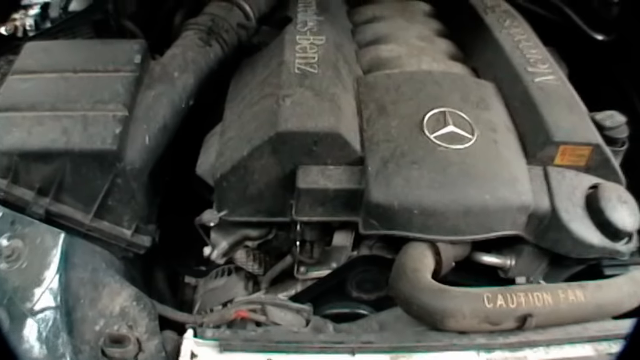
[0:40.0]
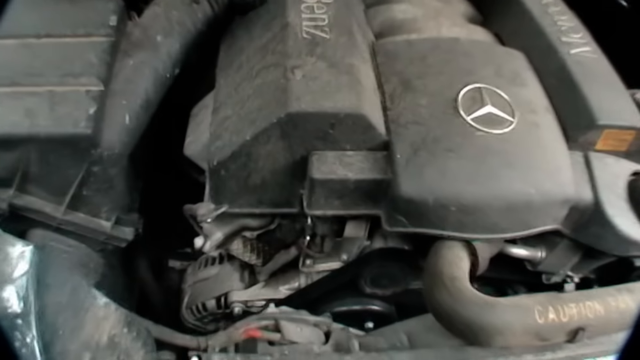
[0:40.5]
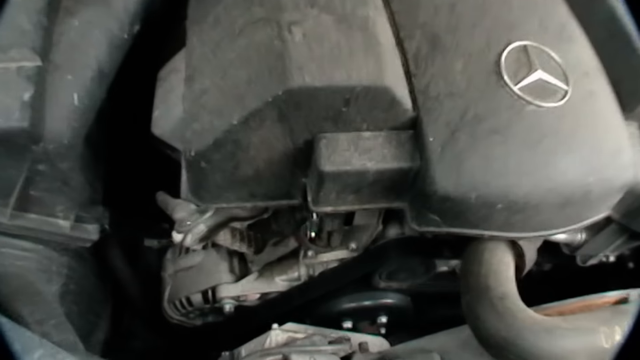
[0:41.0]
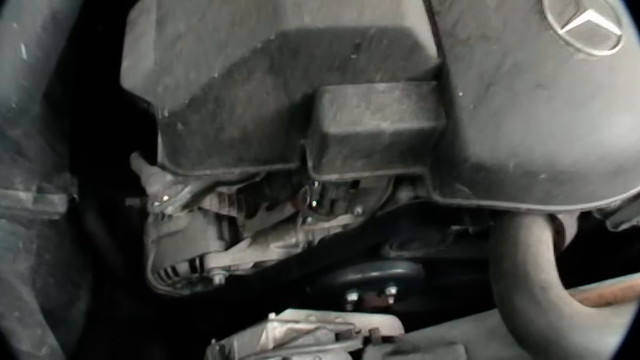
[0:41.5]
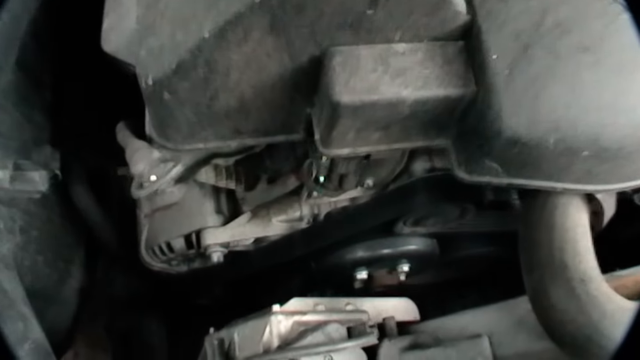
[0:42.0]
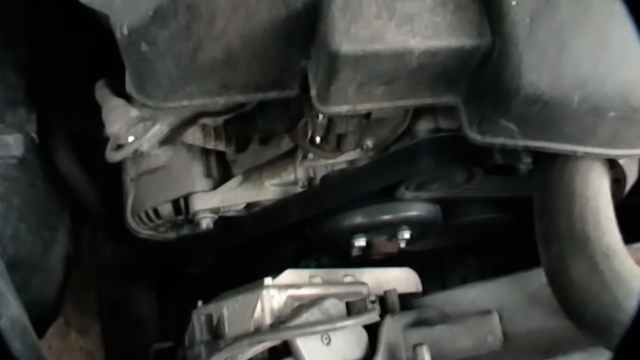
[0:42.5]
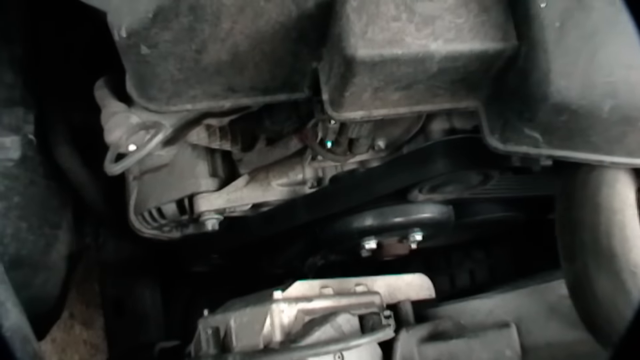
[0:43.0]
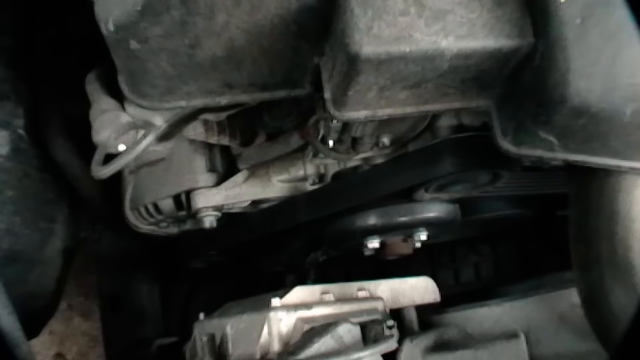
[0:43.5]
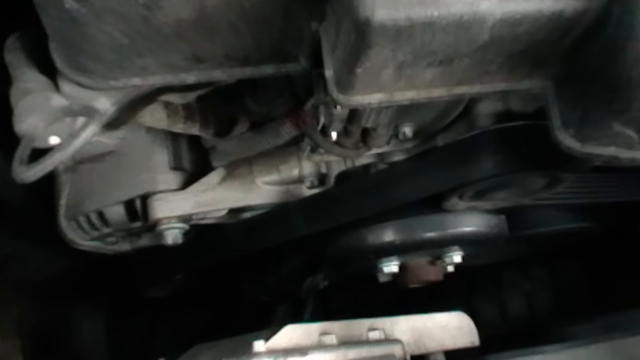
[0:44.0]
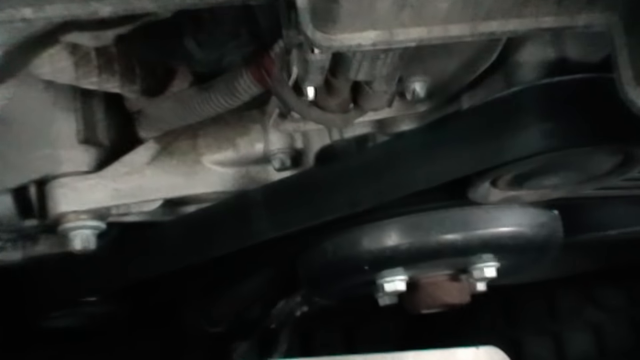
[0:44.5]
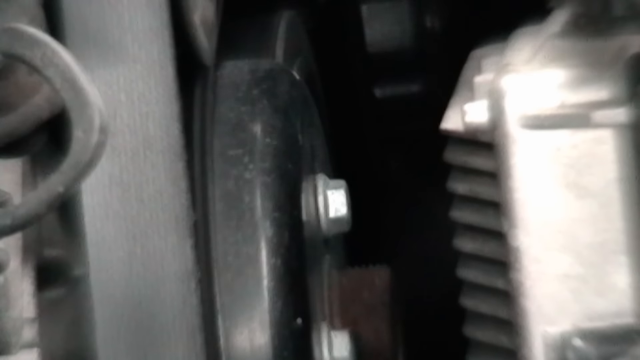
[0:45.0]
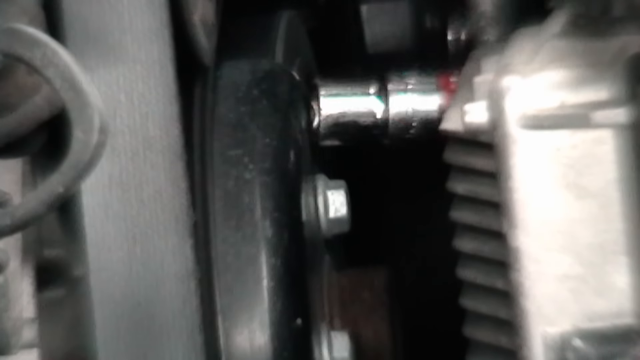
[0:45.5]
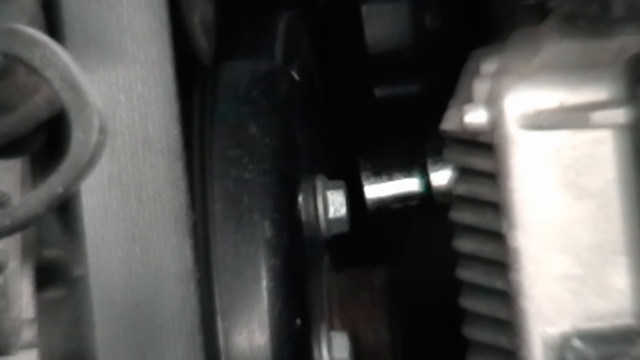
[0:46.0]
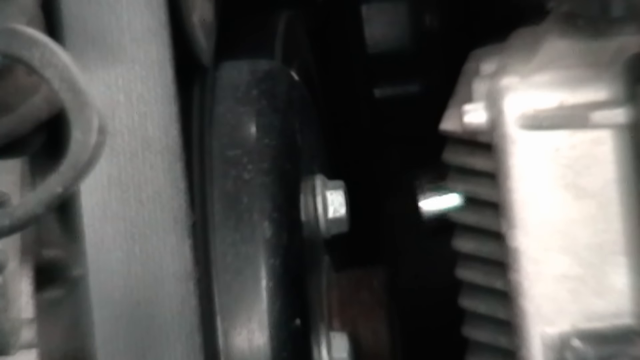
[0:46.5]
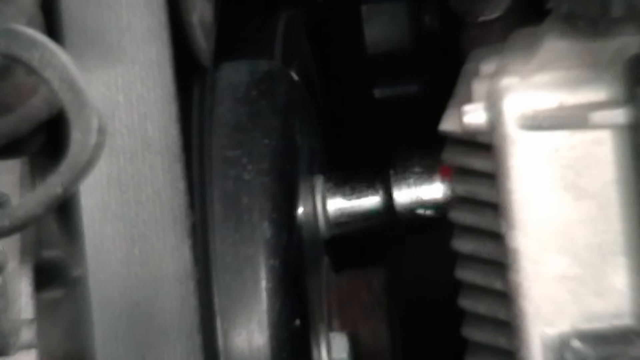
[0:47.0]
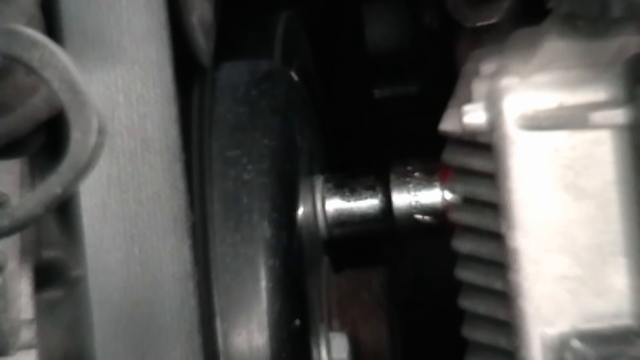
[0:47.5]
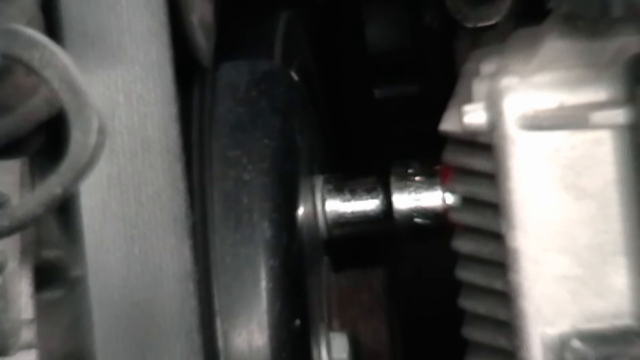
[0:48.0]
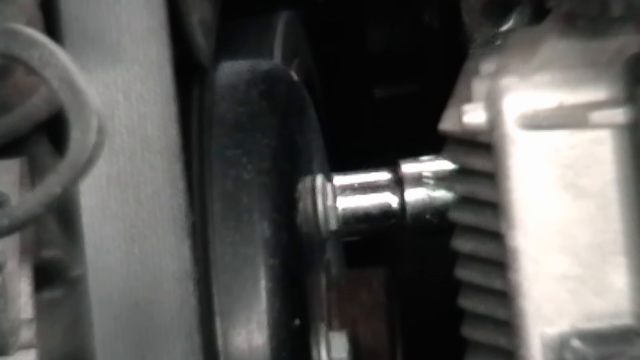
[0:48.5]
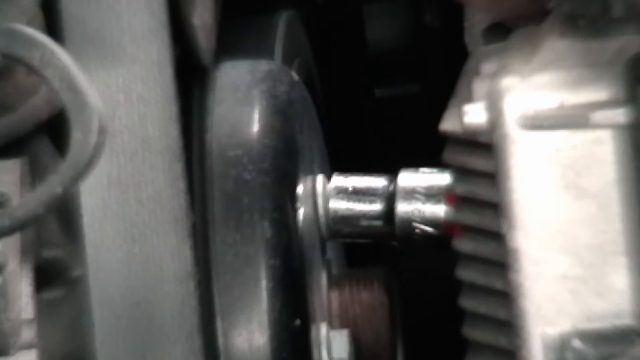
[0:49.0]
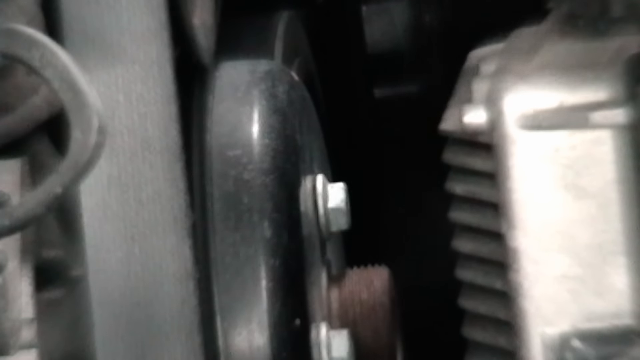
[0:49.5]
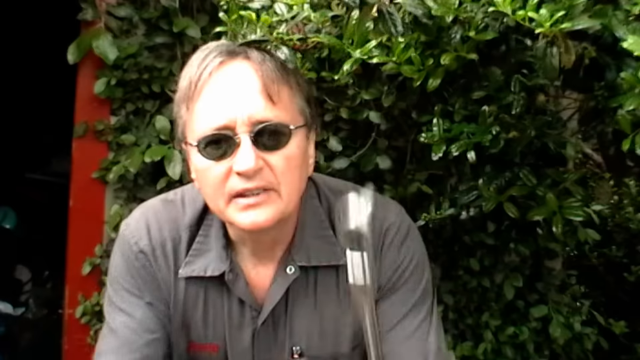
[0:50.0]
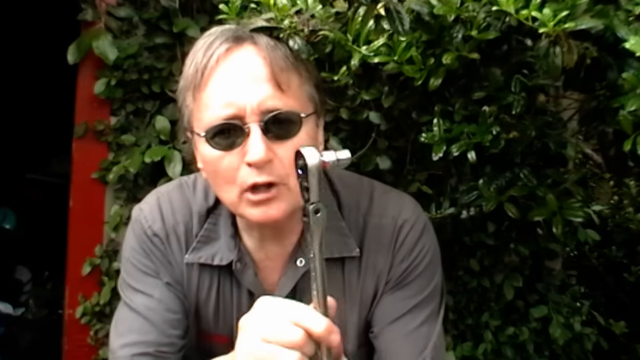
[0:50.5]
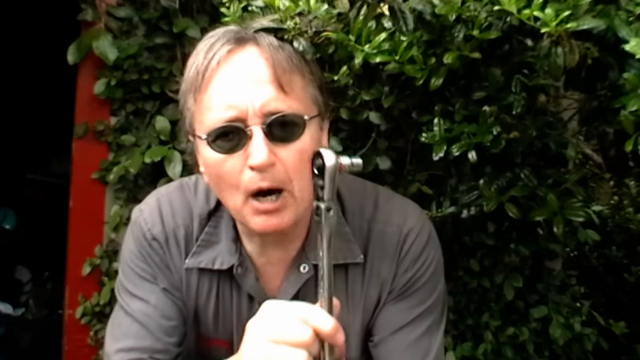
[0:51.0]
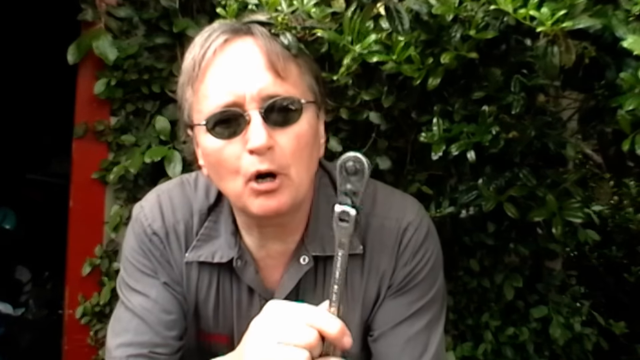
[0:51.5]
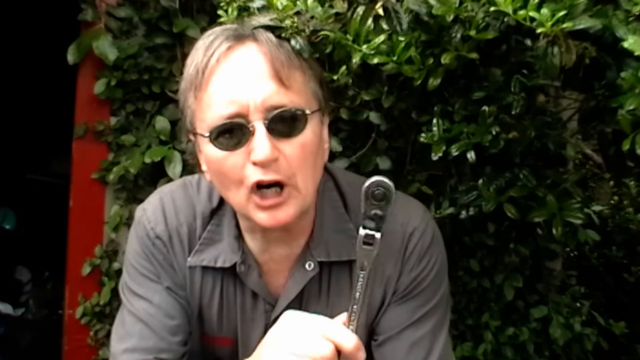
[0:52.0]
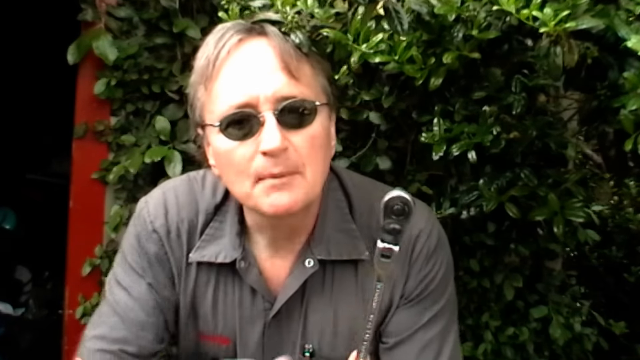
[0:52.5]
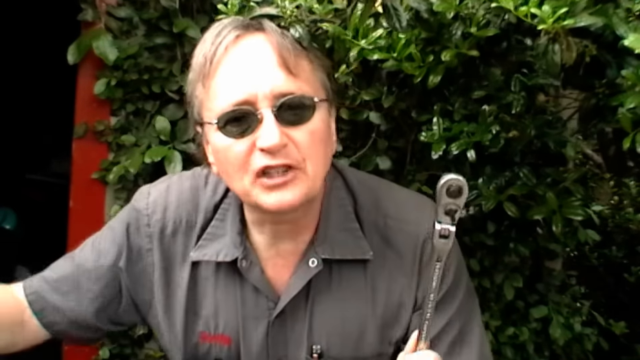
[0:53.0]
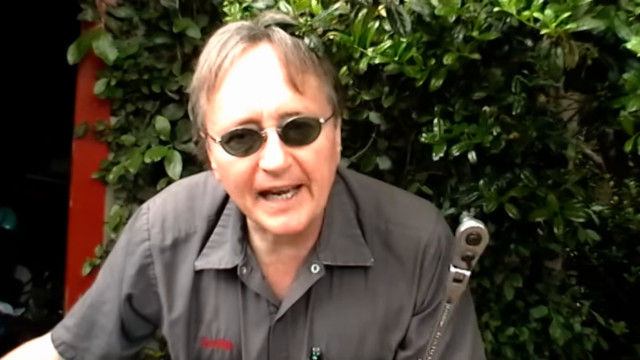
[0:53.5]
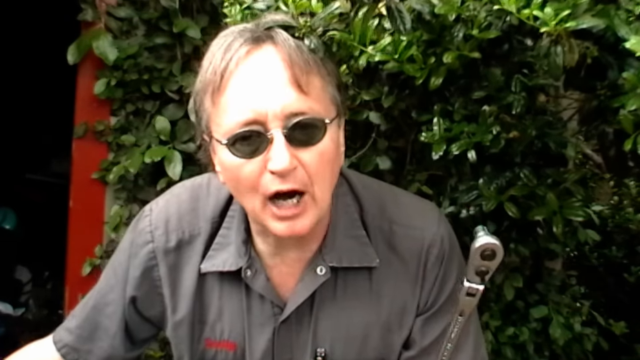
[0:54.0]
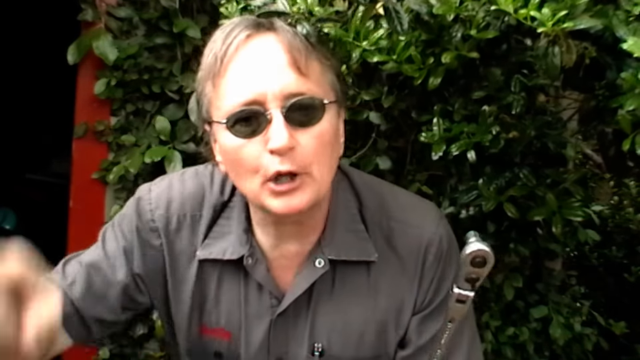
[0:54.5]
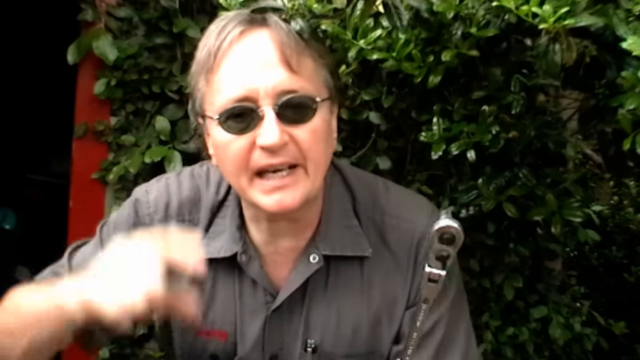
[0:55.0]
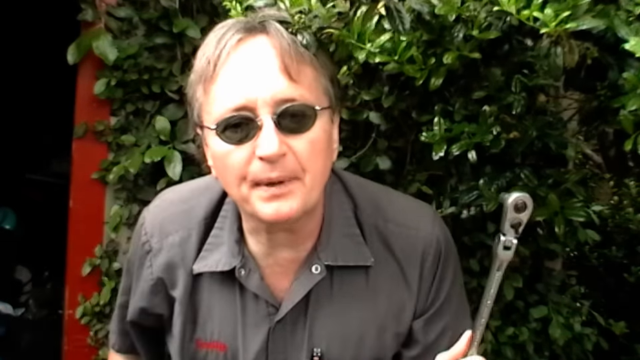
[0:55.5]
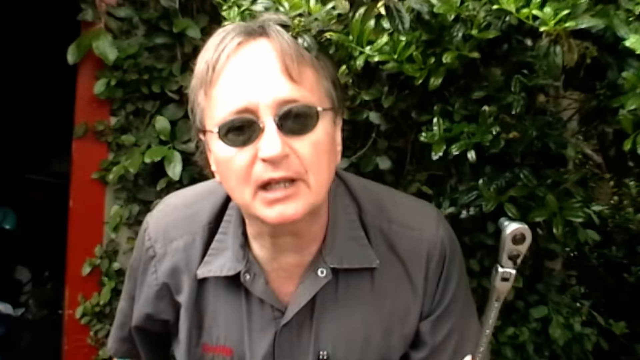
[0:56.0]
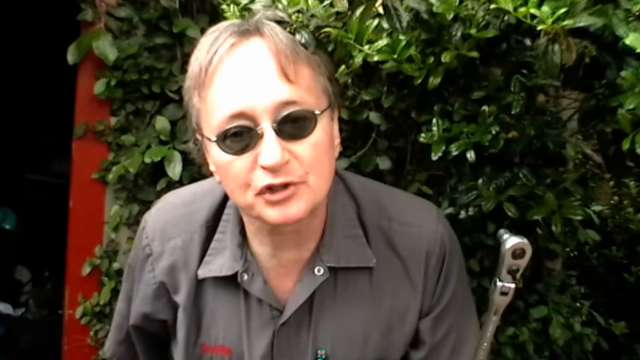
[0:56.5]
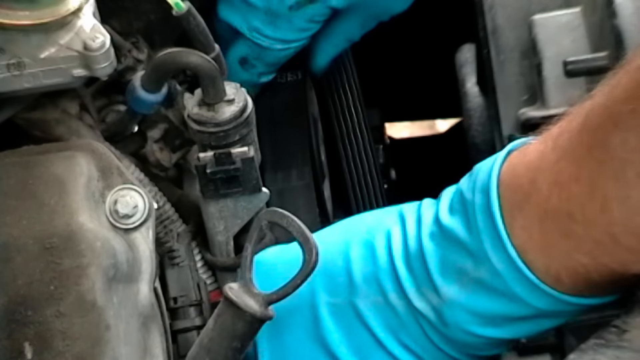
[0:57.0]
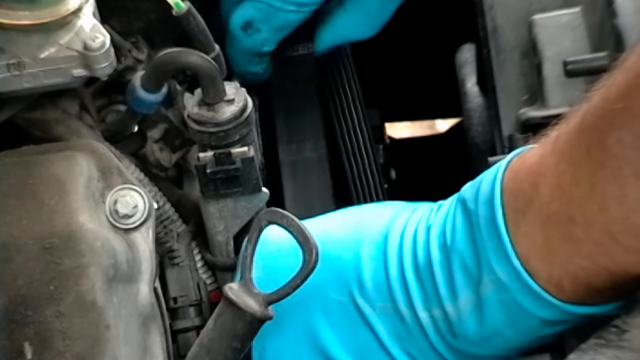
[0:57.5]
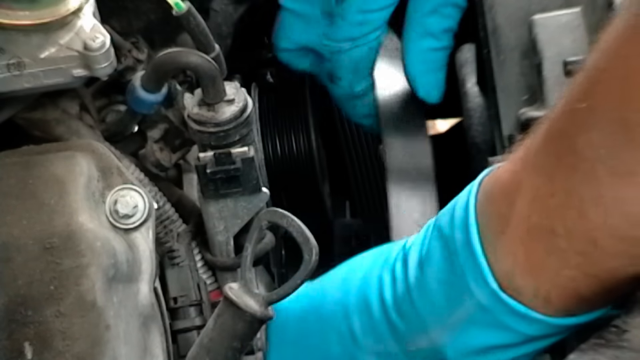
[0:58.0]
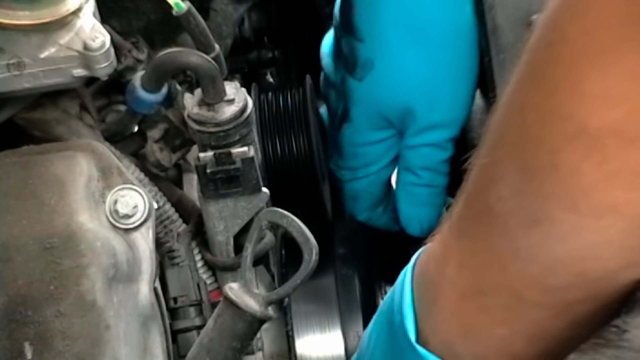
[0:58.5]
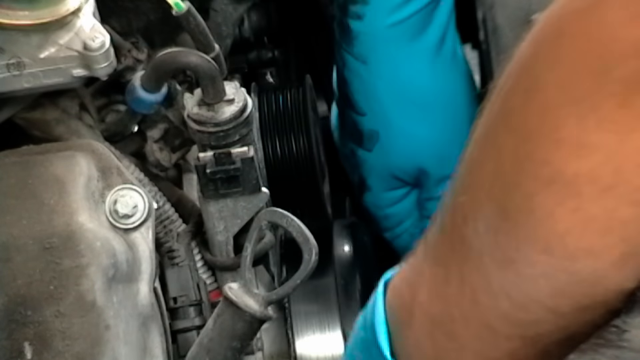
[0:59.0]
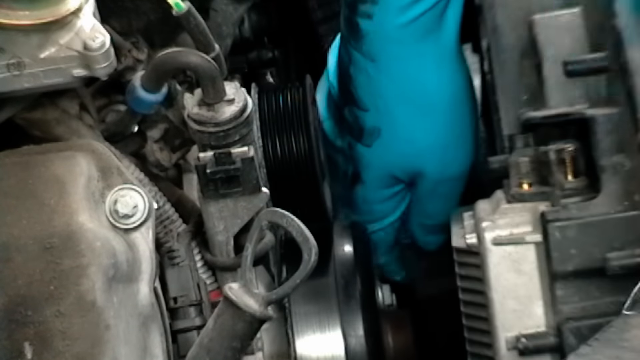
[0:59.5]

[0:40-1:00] The inside of a Mercedes-Benz car engine is shown, with "Mercedes-Benz" written or engraved on some of the engine parts and the Mercedes-Benz emblem on a part as well. The camera moves in close to a round black area inside the engine that has a strap attached to it. There is a large nut or bolt there, and what looks like a bolt loosener or screwdriver is placed on it and turned slowly to loosen the bolt. The man seen earlier returns, holding the tool and showing it: it has a round top, a long handle, and a place for a bolt, used to tighten and loosen bolts. He talks as if explaining how to remove the part. He then removes what looks like a strap from inside the vehicle and slowly unwinds it.